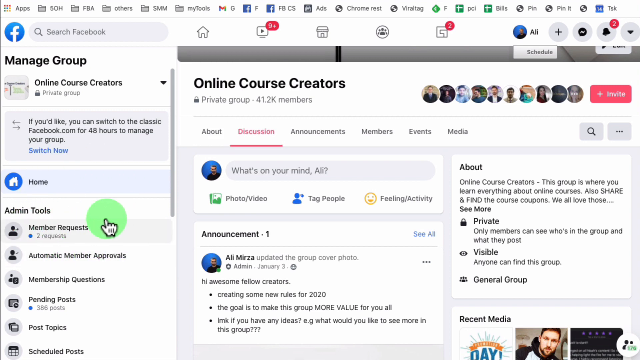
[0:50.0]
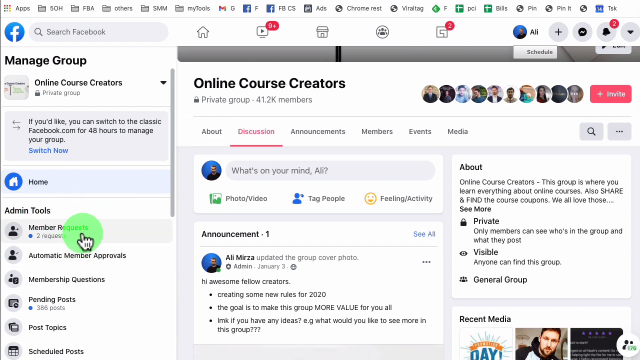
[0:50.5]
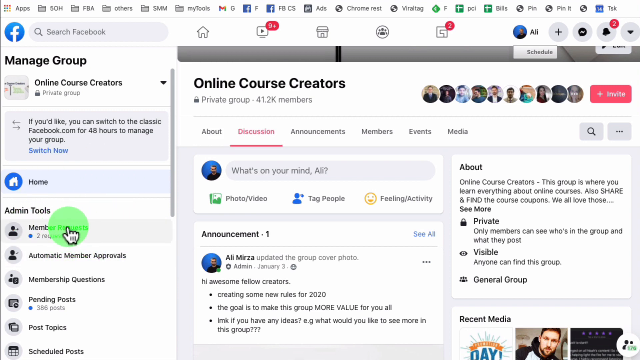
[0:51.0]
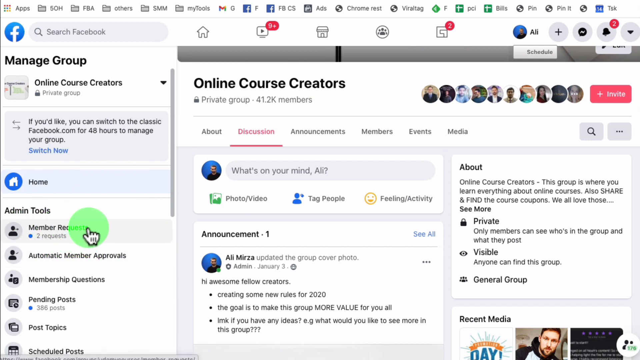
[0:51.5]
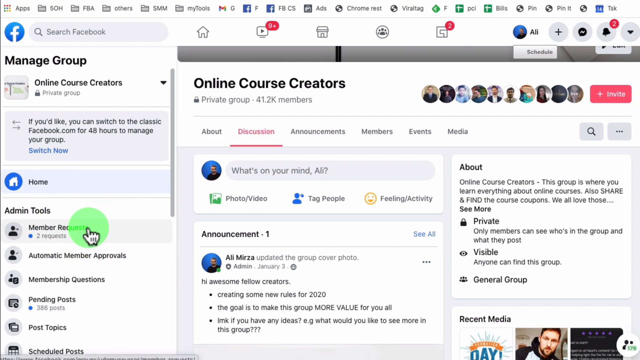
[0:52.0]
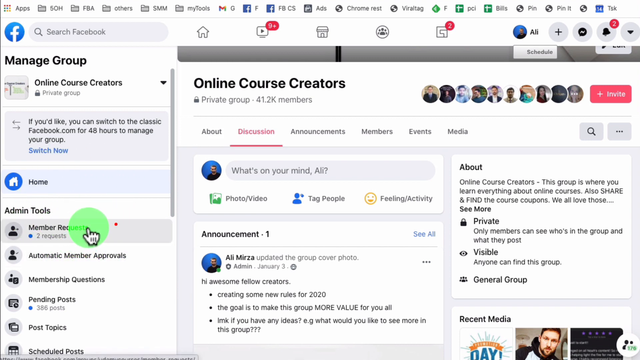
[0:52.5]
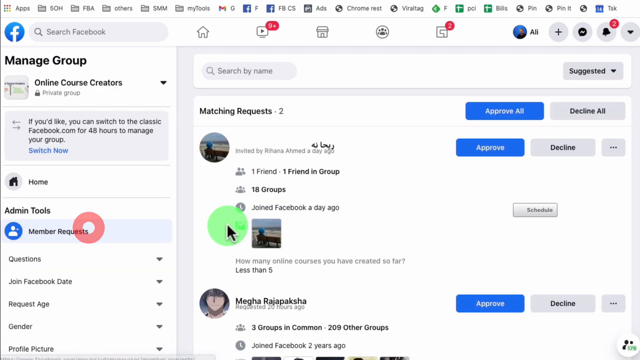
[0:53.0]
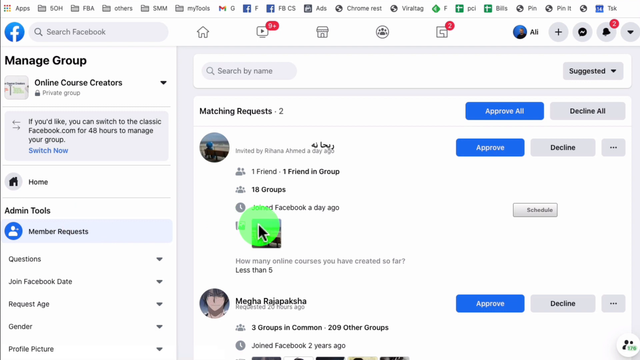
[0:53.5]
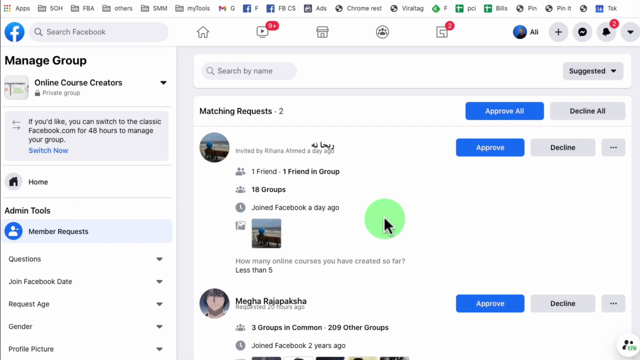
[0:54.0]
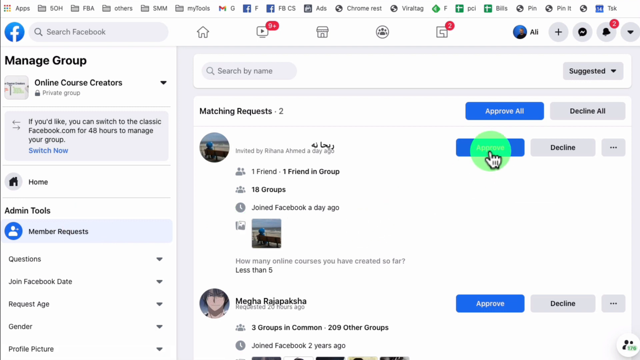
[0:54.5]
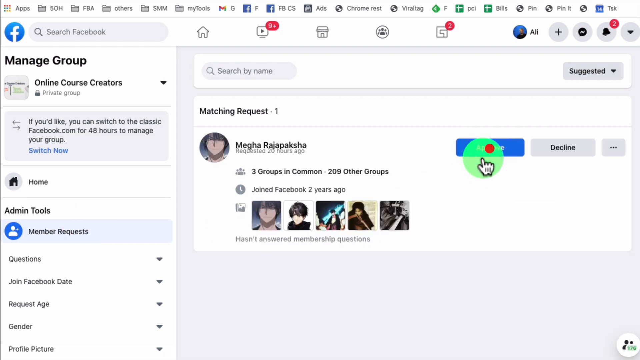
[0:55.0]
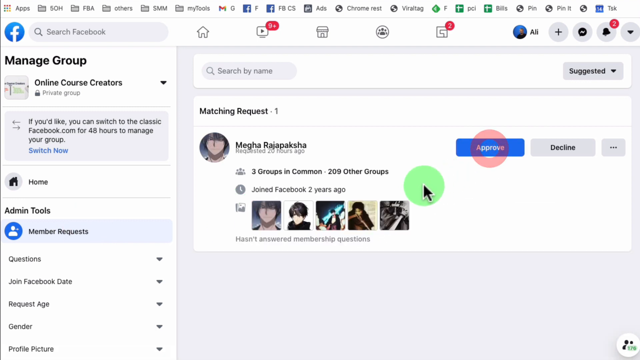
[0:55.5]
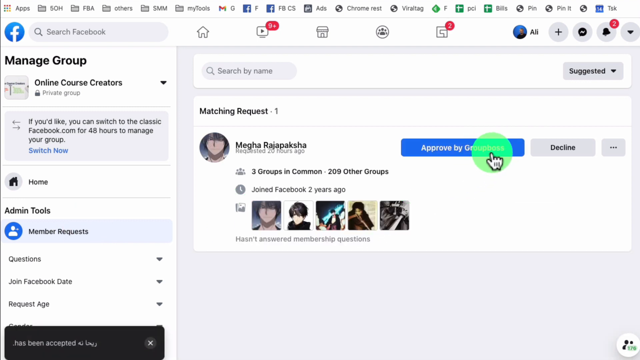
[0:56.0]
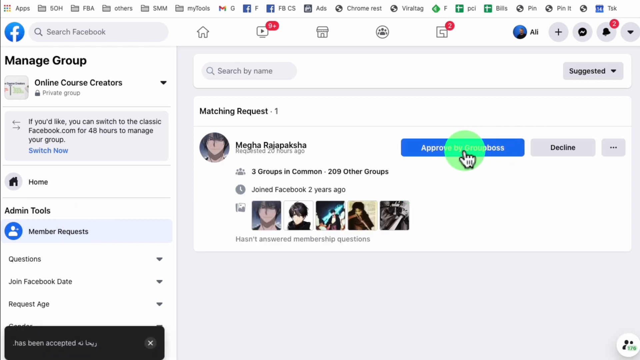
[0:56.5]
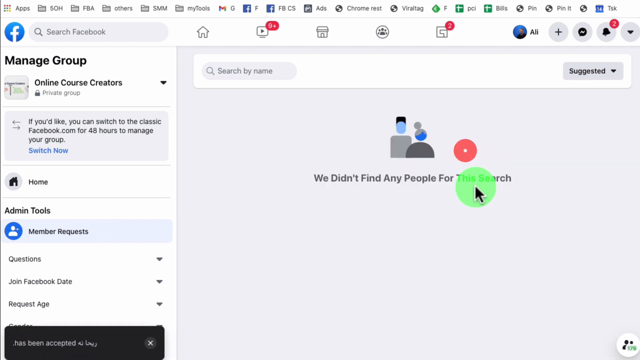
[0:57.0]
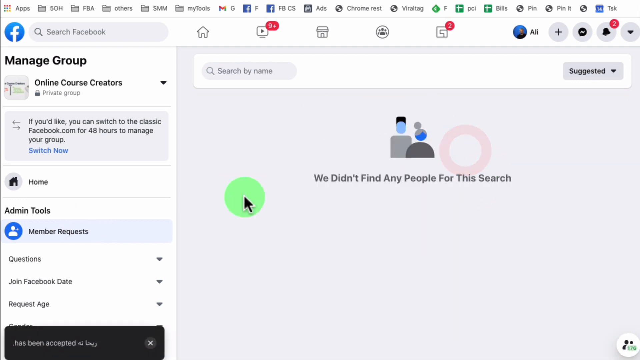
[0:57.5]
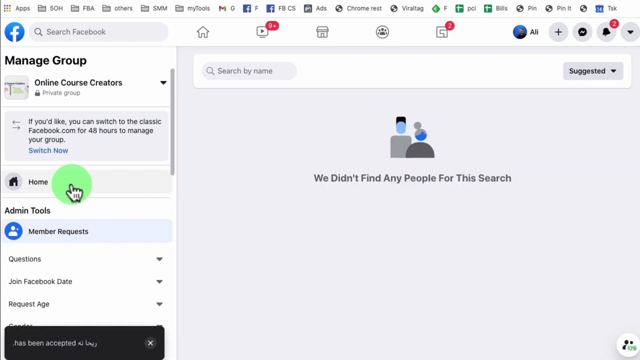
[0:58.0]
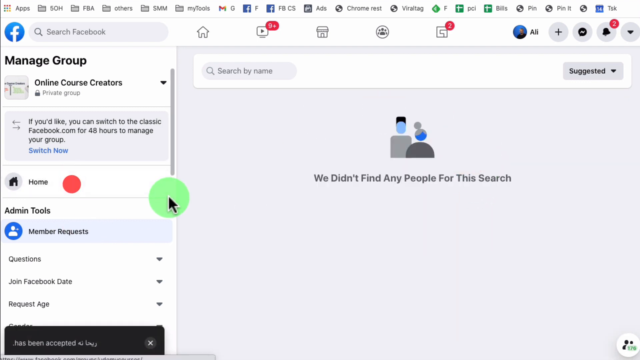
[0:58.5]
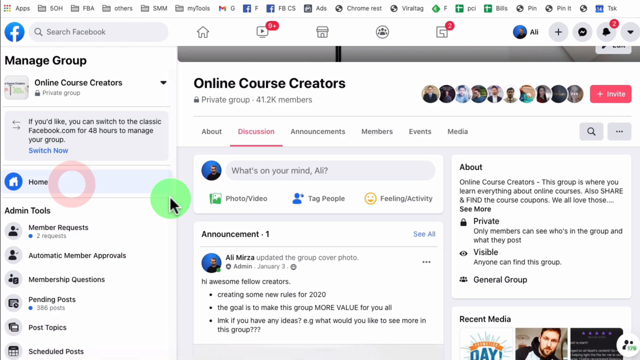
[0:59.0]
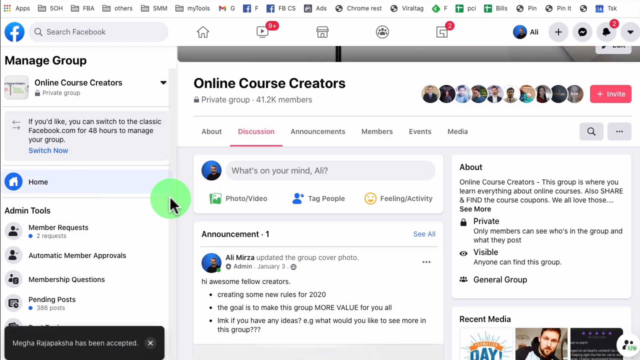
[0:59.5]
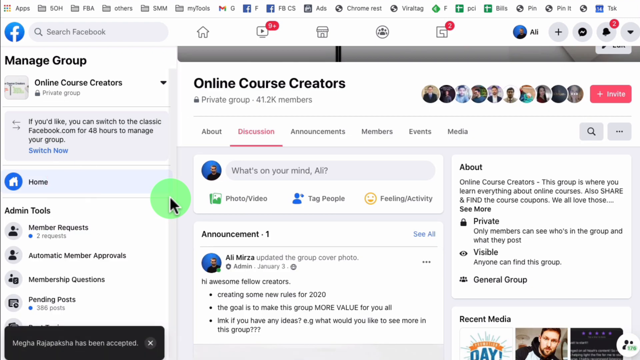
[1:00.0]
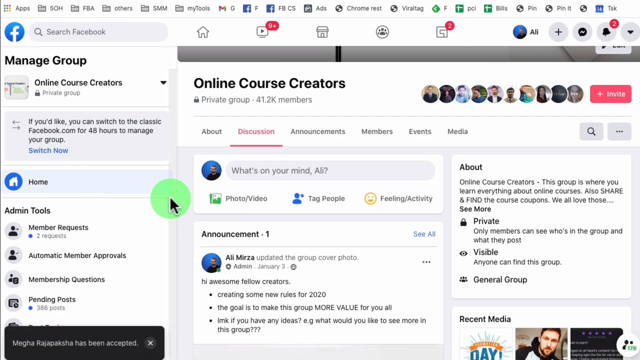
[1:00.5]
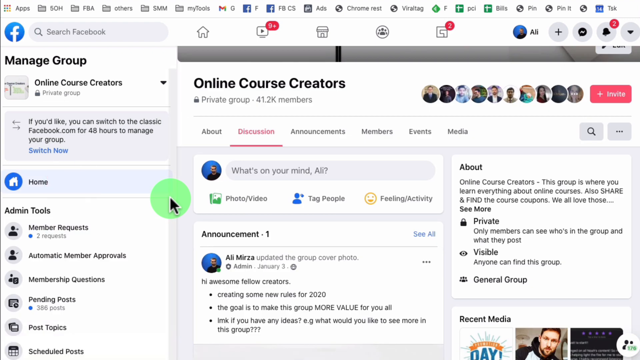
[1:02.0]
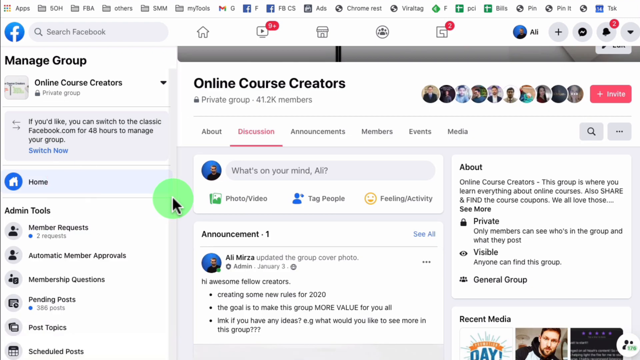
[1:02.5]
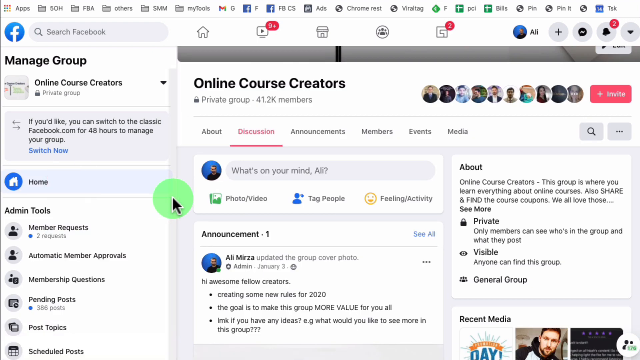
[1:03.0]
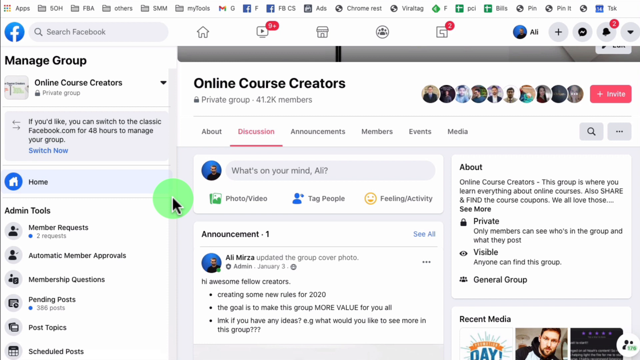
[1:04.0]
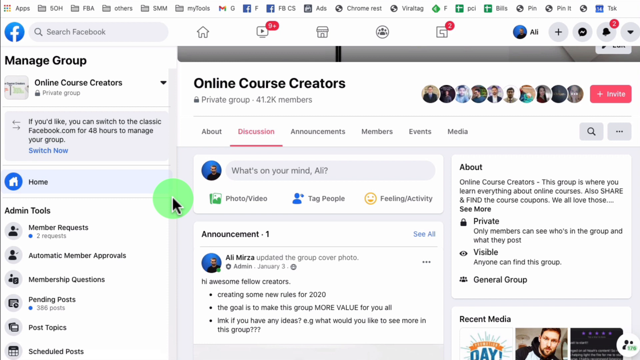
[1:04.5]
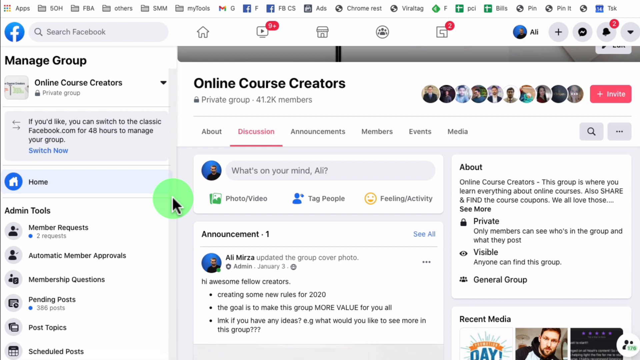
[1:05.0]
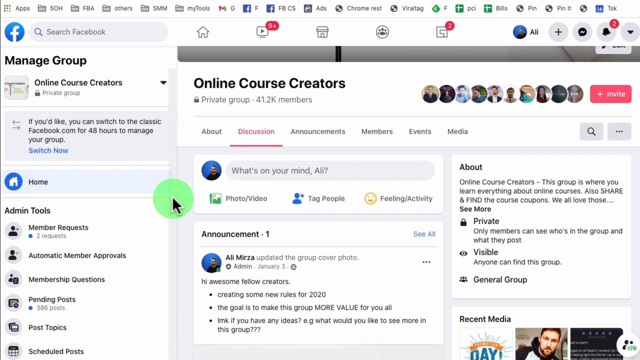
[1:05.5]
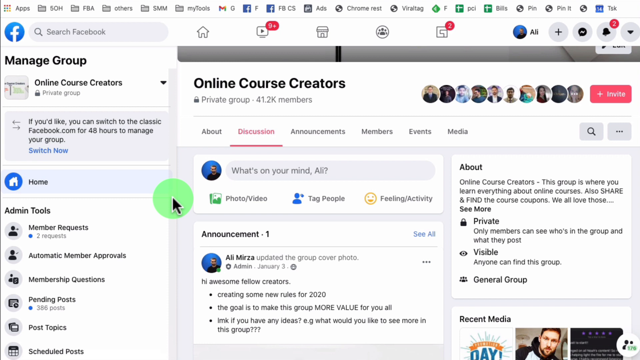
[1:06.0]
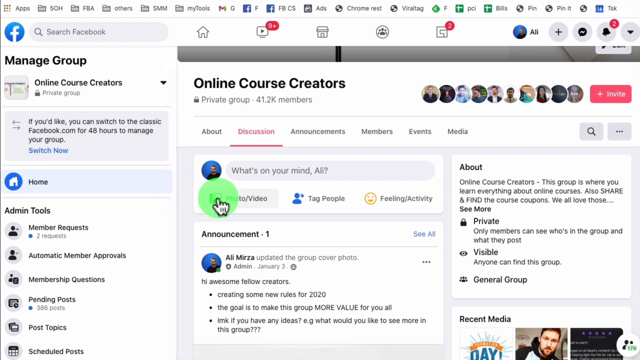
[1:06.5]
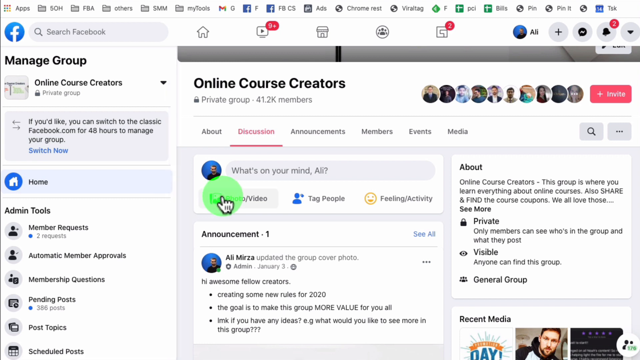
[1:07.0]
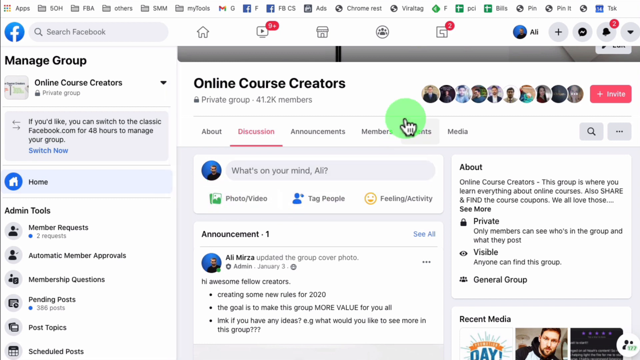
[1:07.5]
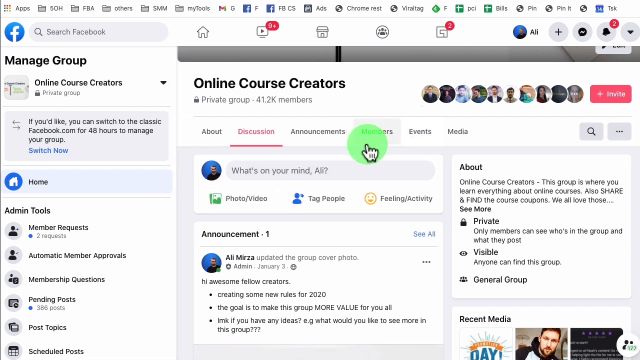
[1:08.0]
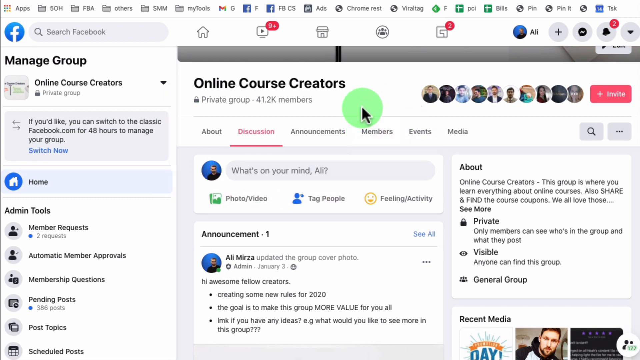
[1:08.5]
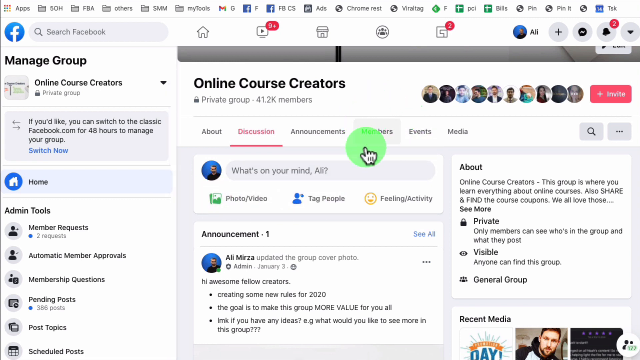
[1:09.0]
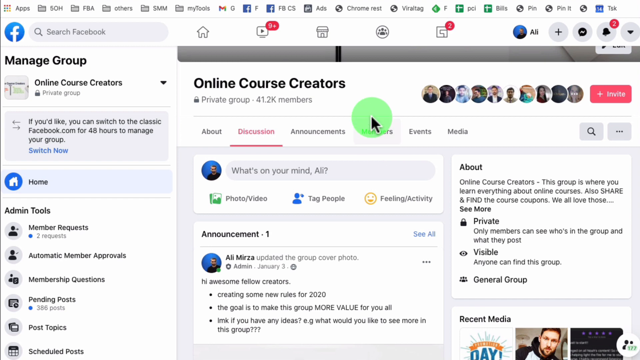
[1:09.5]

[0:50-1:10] The page reads "Manage the group", where people are approved to join the group, and there is content written about online course creators and content creators. The mouse hovers over the approval section, where no people are waiting to be approved, then hovers all around the page. There are profile pictures of people in the group. At the top are recently opened pages. The page background is white, the Facebook logo is blue, and "home" is written in blue. The owner's picture has a blue background and shows him in a black t-shirt.